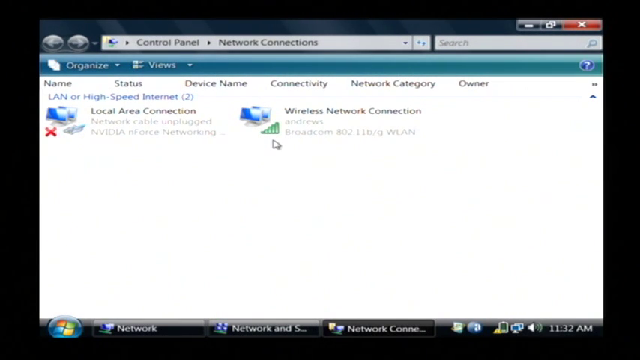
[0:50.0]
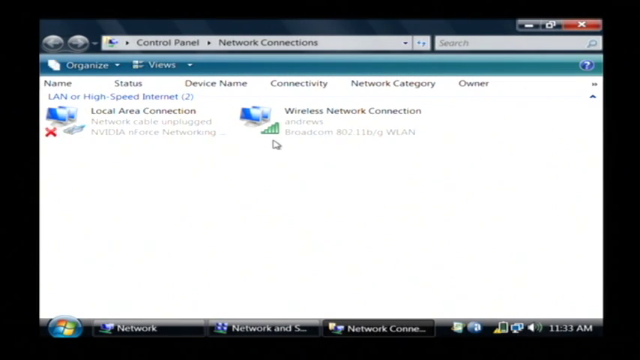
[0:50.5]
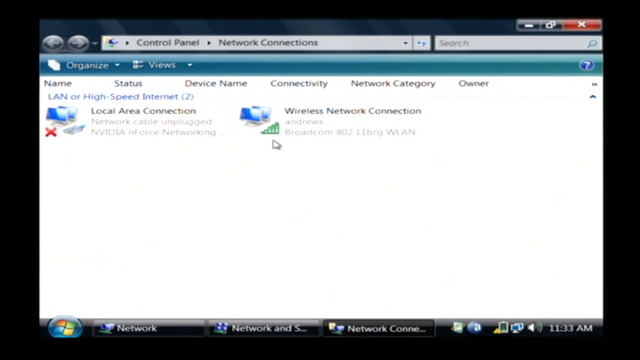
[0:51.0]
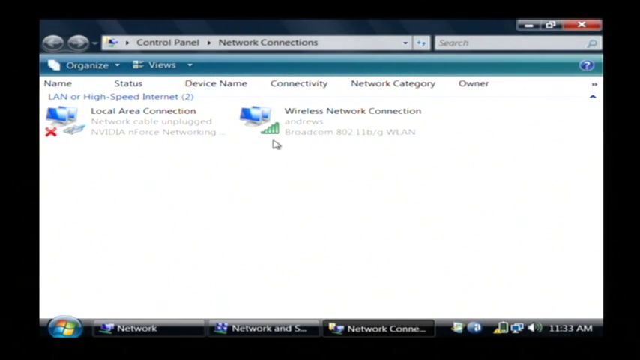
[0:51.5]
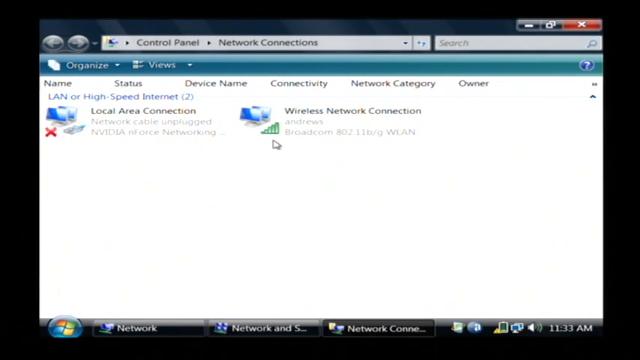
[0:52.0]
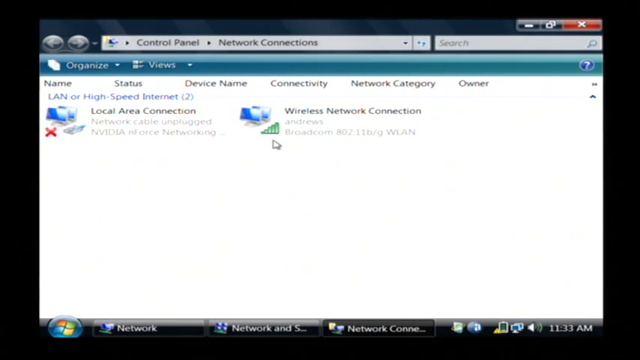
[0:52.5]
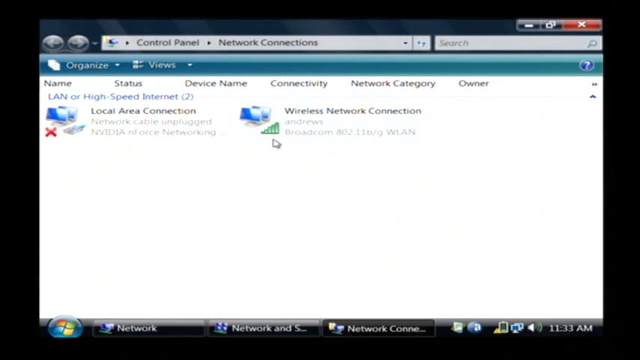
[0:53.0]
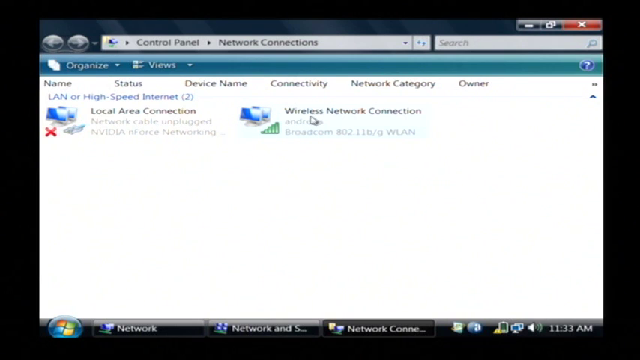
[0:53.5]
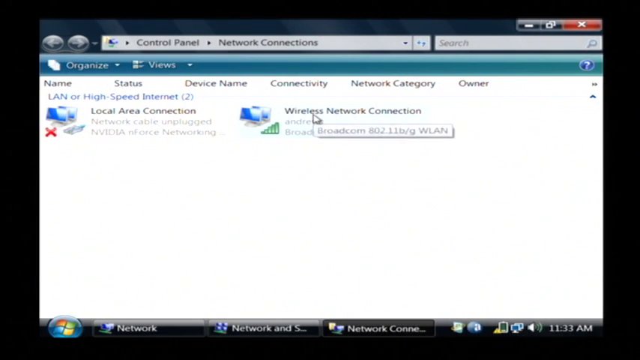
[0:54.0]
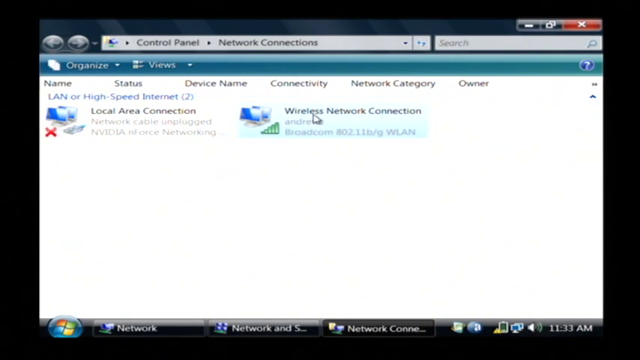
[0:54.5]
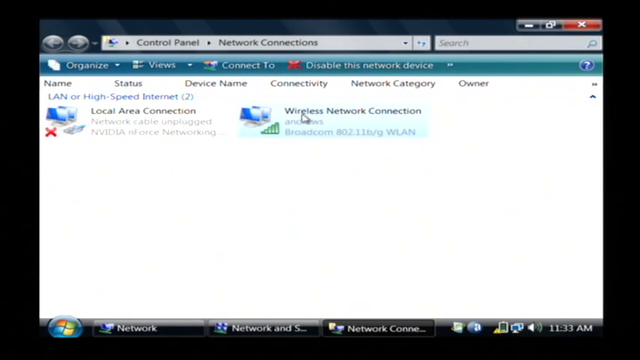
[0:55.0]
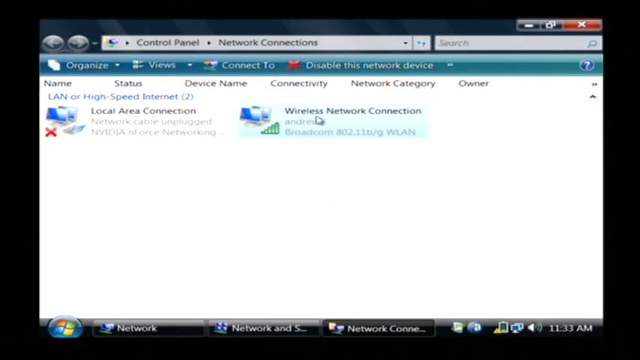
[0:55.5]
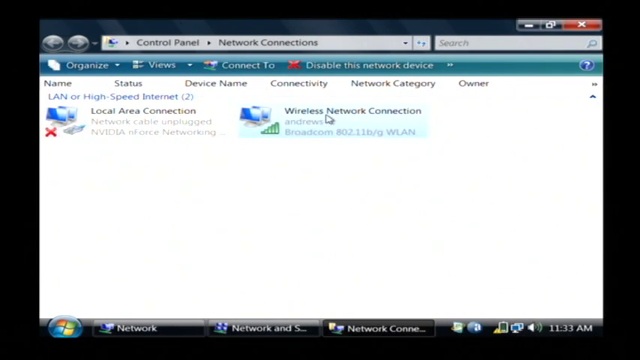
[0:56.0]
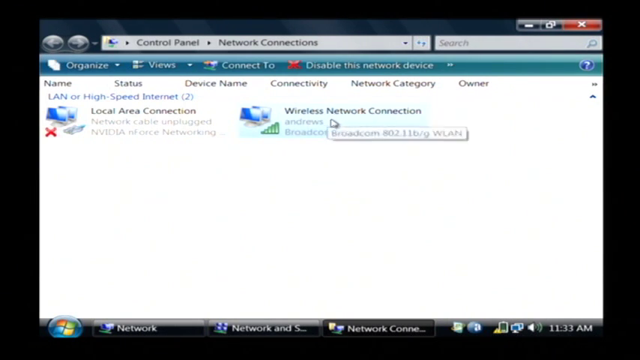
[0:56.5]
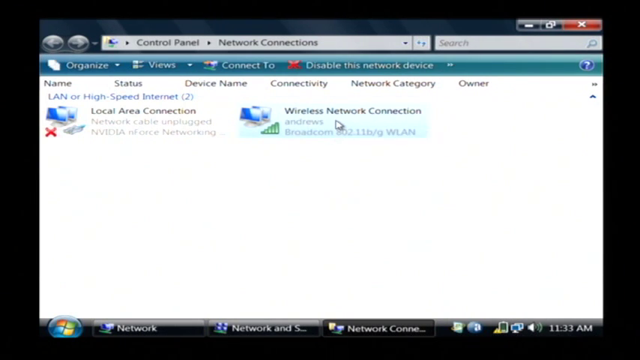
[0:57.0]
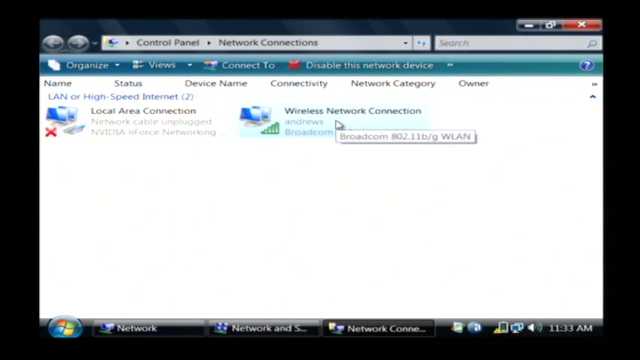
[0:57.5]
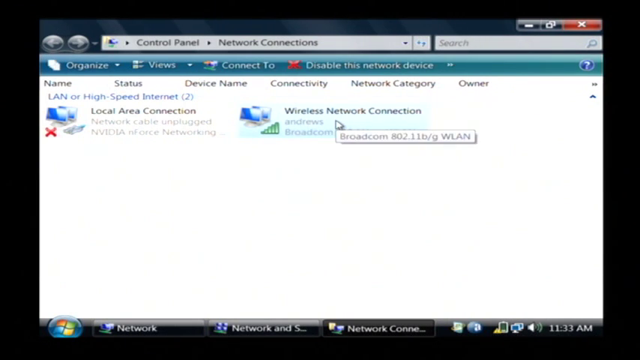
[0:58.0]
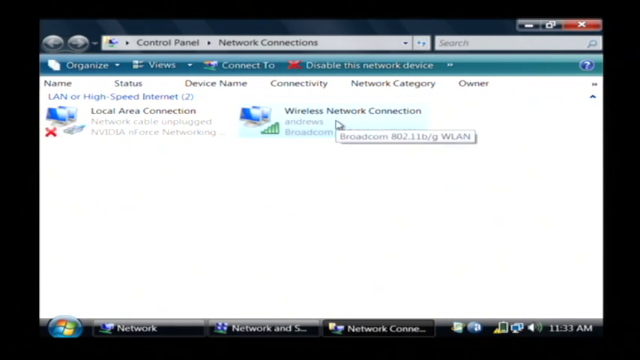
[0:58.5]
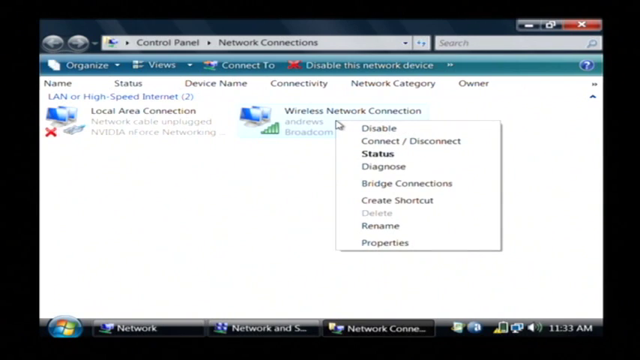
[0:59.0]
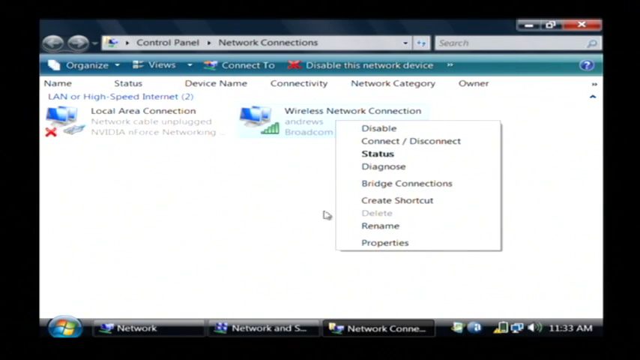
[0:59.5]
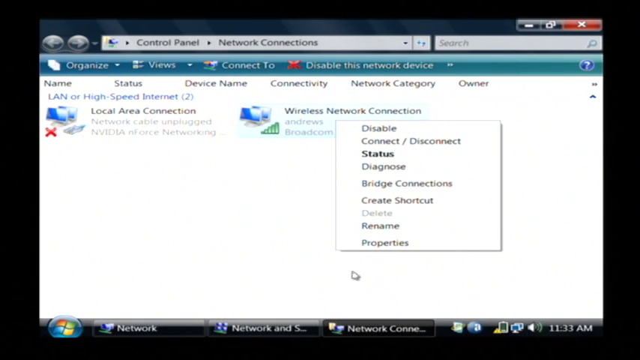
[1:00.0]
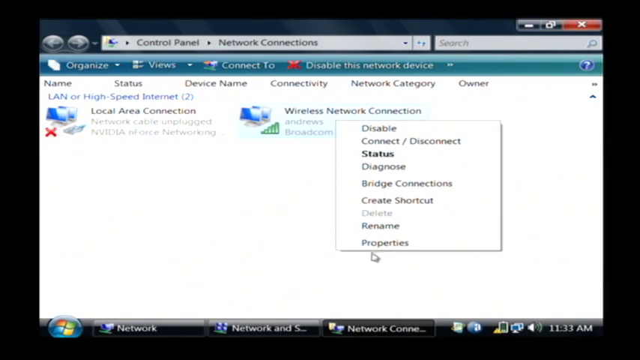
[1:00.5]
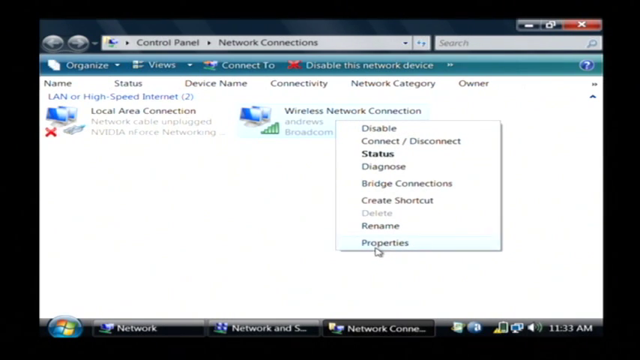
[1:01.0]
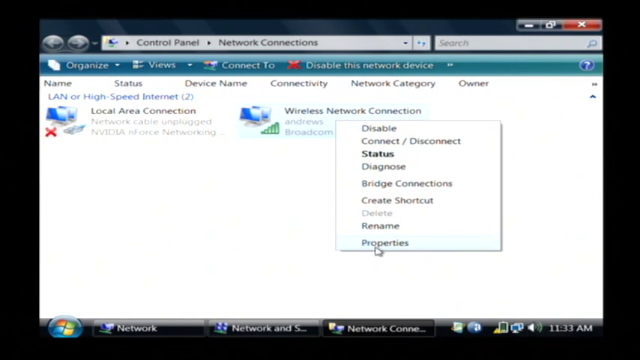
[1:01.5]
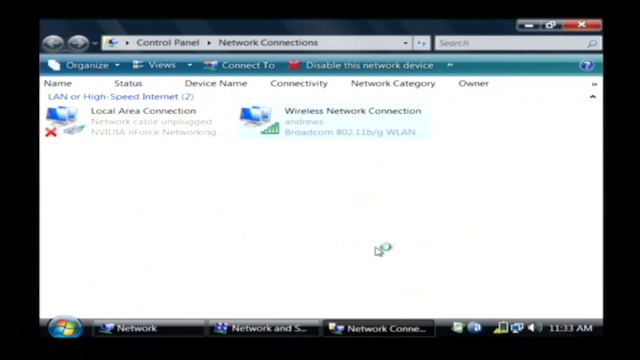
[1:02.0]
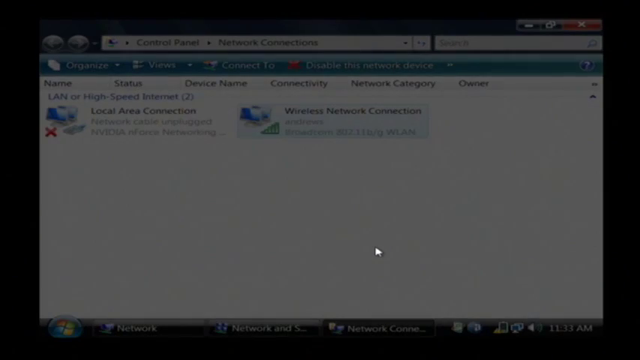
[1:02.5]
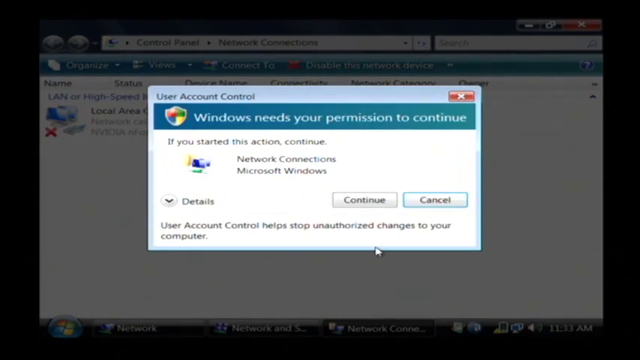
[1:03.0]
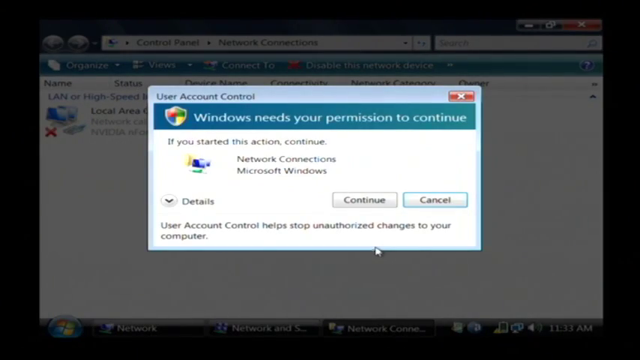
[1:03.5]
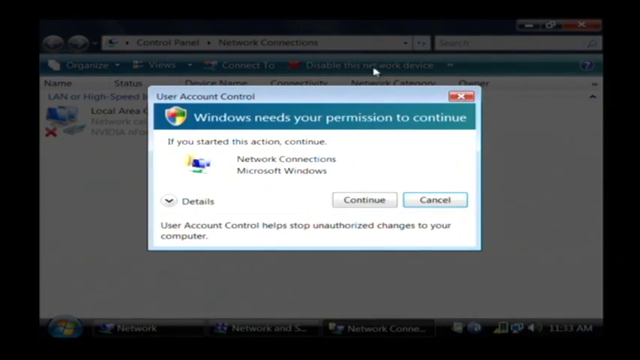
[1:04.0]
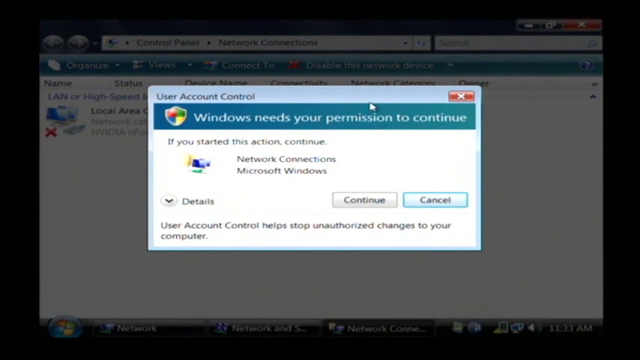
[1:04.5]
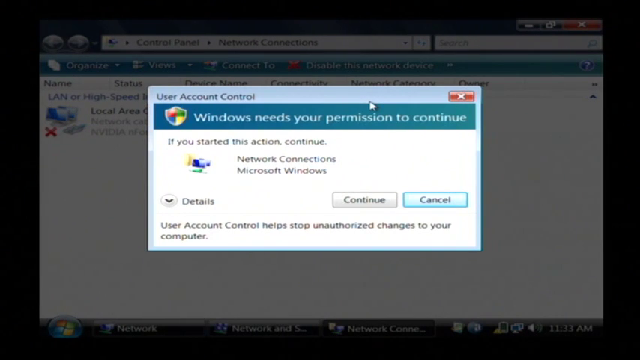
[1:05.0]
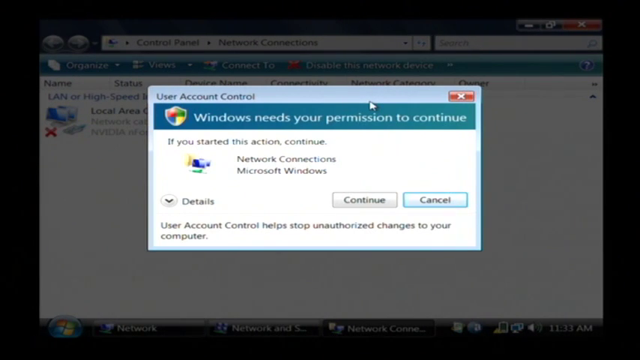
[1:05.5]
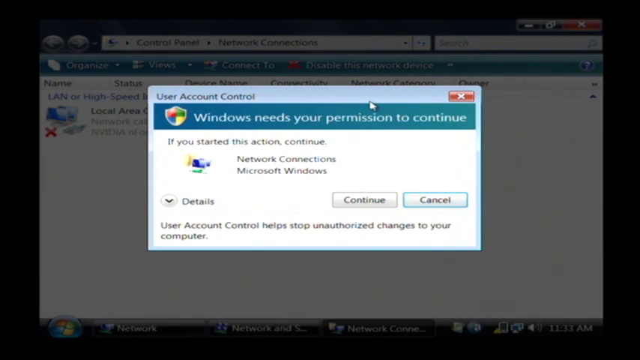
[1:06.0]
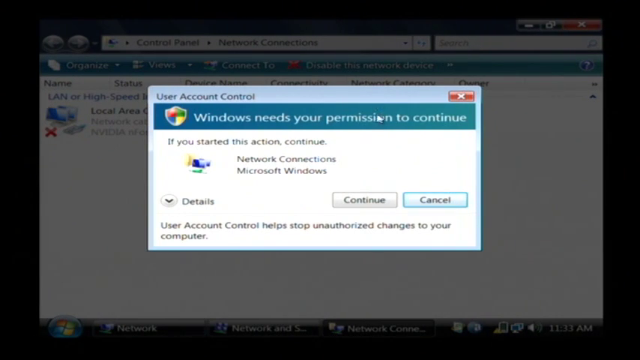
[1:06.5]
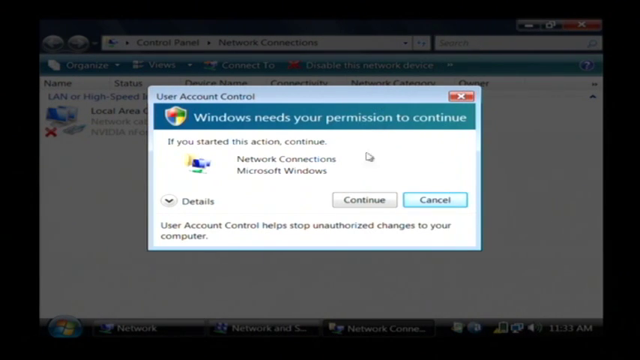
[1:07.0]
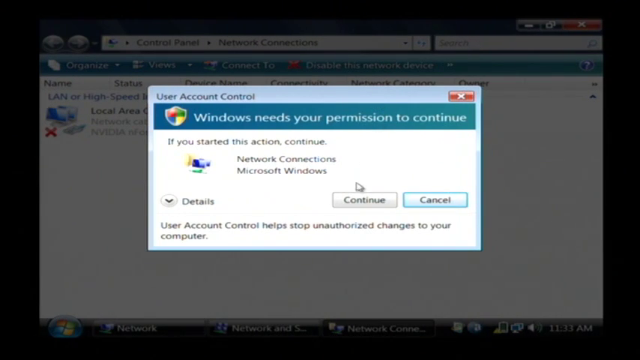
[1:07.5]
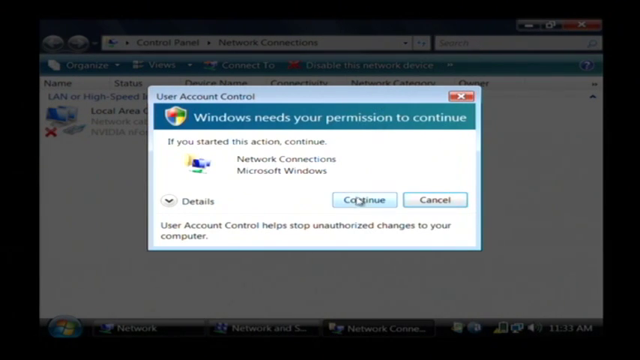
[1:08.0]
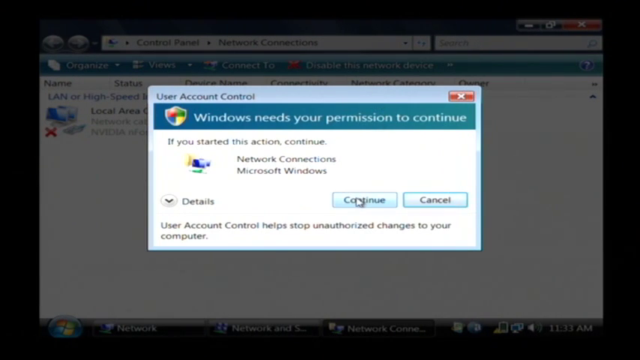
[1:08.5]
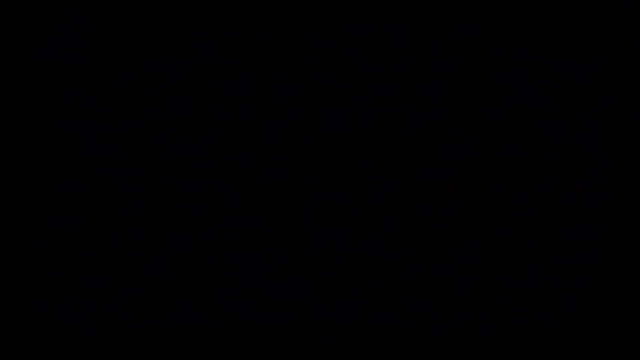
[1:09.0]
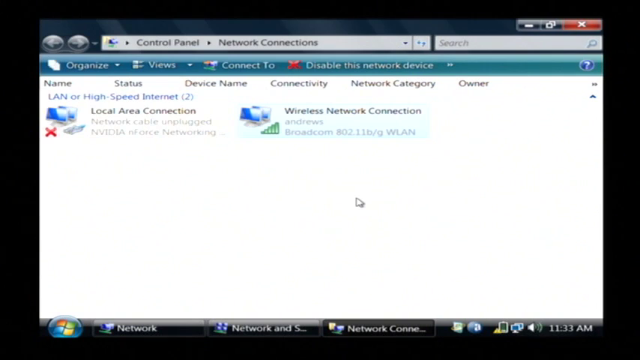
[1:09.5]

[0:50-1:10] A new program screen reads "control panel, network connections" across the top, followed by a search bar. The next bar, a dark teal bar, reads "organize" and next to it "views" with an arrow. Below that, on a separate line, it reads "name, status, device name, connectivity, network category, owner", followed by two arrows pointing to the right. Below that, left-justified, it reads "LAN or high speed internet (2)". Below that is a computer icon with a red X and a keyboard, reading "local area connection, network cable unplugged, NVIDIA NF office networking". Next to it is another network computer icon with a green graph, reading "wireless network connection", "Andrews", "Broadcom 80211 B/G WLAN". The mouse hovers underneath the green graph, then moves to wireless network connection and clicks. A menu opens reading "Disable", "Connect", "Disconnect", "Status", "Diagnose", "Bridge Connections", "Create Shortcut", "Delete", "Rename", "Properties". The mouse hovers over Properties and clicks, and the screen changes.